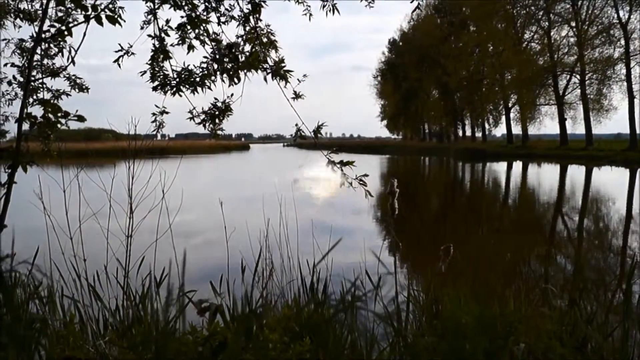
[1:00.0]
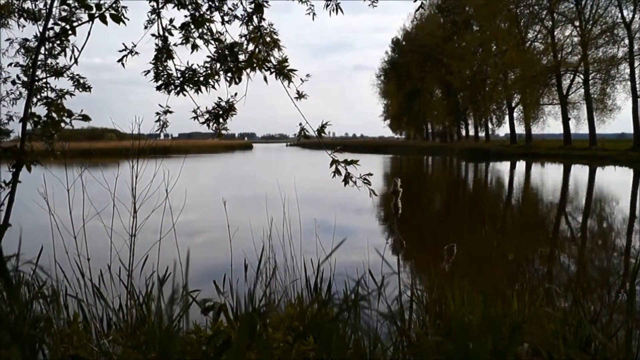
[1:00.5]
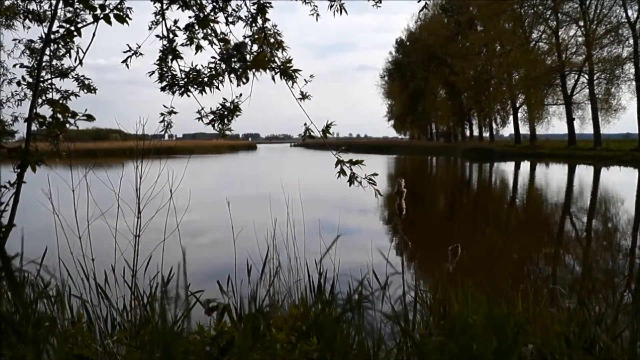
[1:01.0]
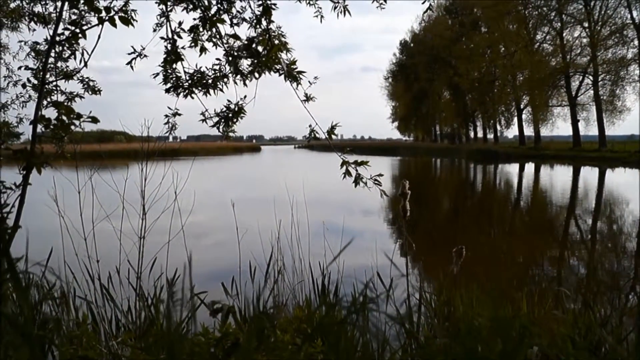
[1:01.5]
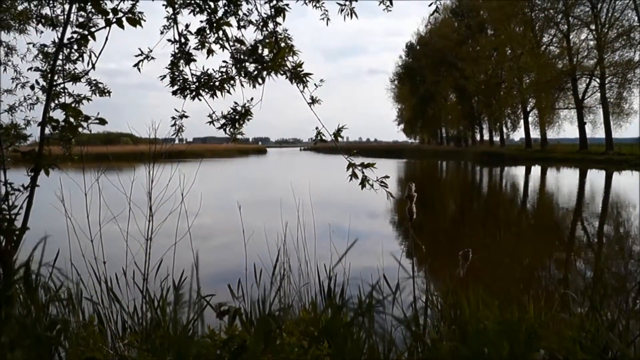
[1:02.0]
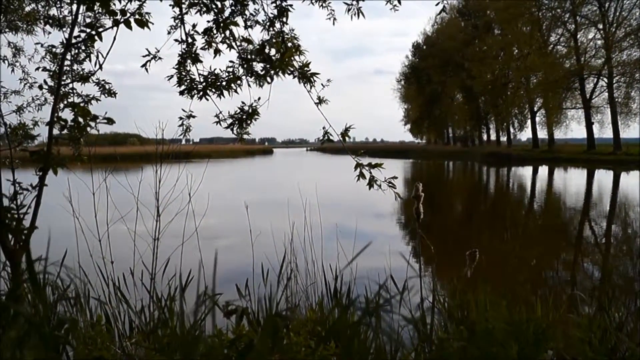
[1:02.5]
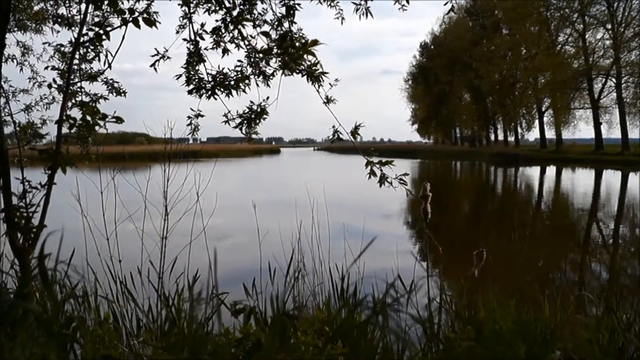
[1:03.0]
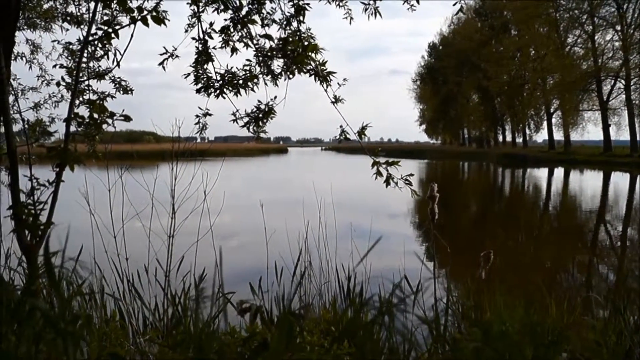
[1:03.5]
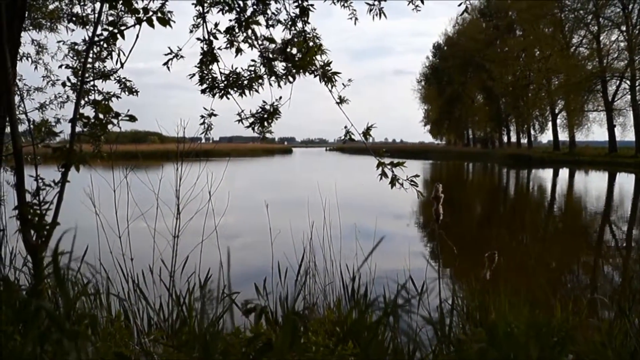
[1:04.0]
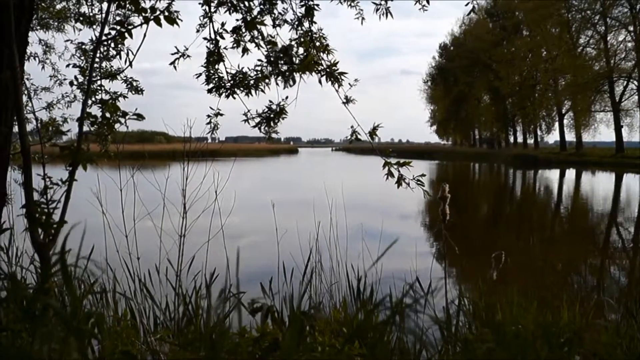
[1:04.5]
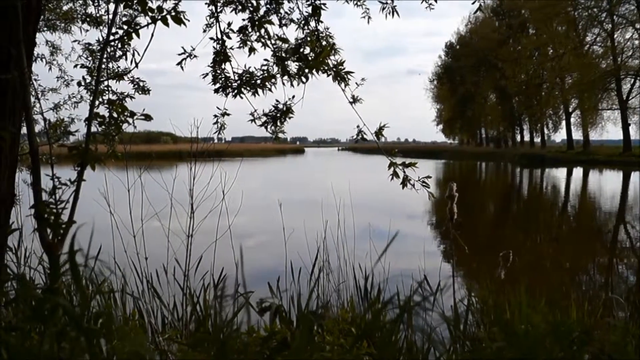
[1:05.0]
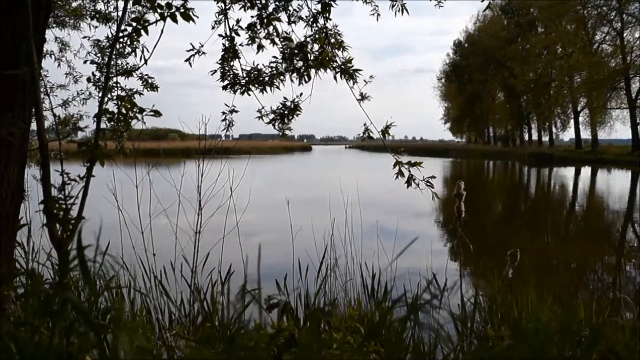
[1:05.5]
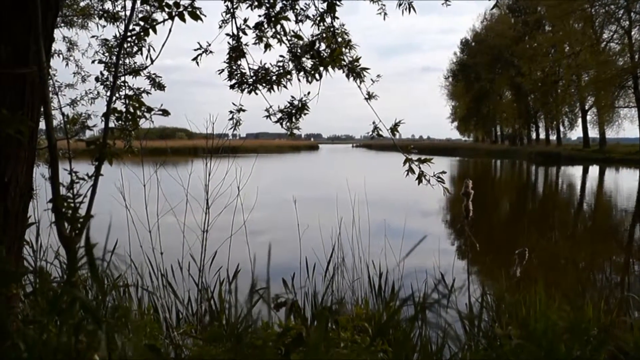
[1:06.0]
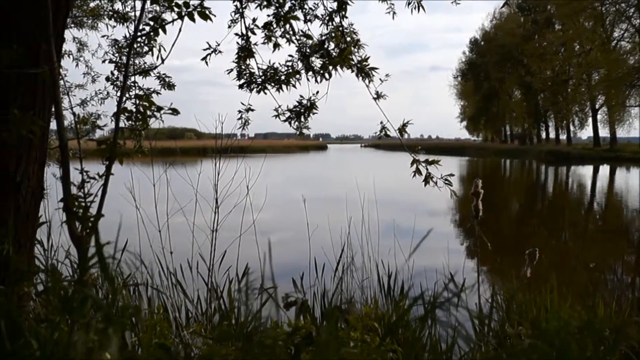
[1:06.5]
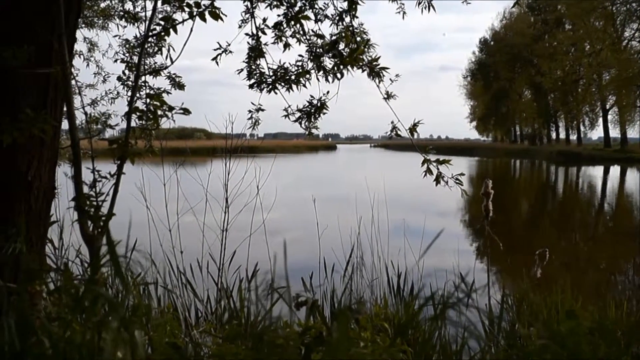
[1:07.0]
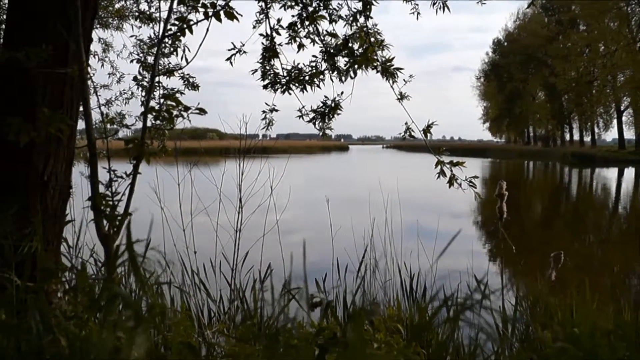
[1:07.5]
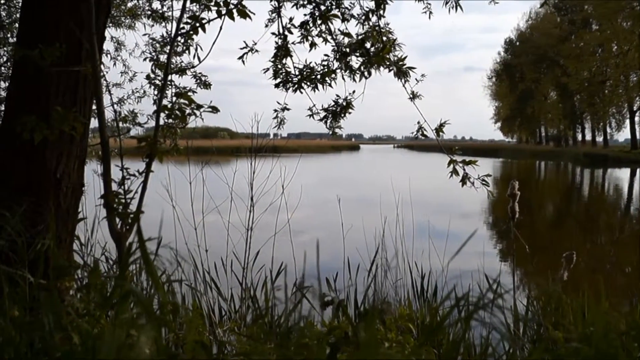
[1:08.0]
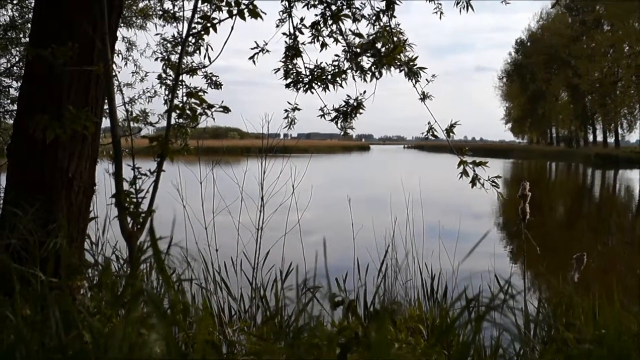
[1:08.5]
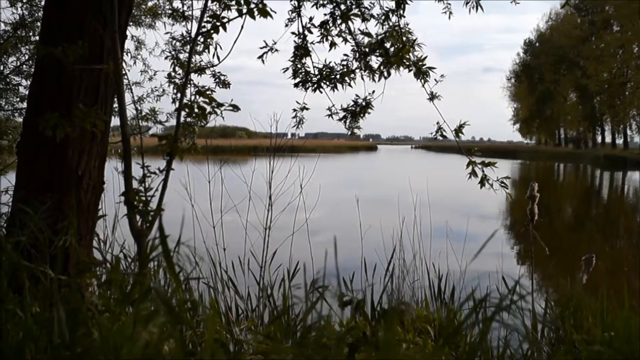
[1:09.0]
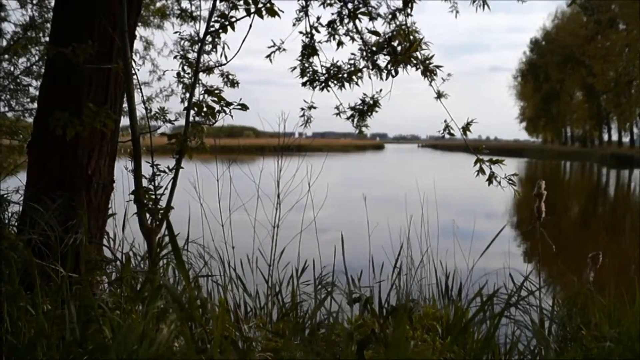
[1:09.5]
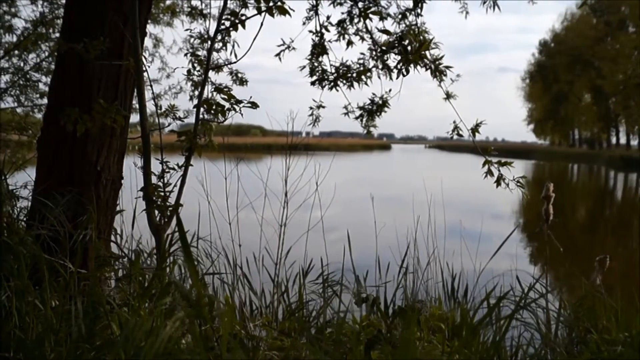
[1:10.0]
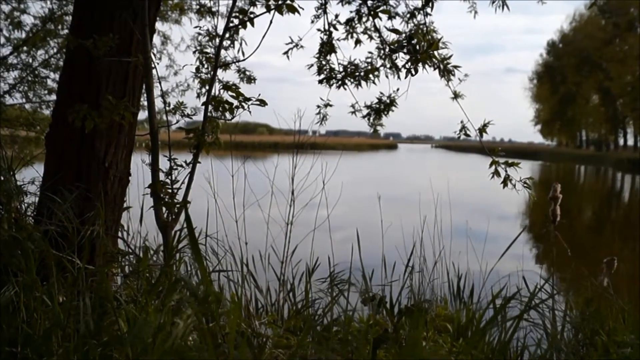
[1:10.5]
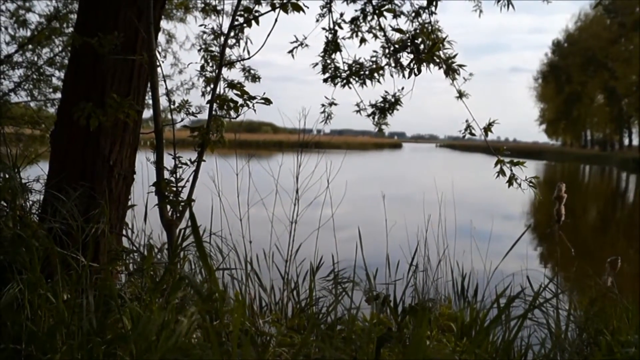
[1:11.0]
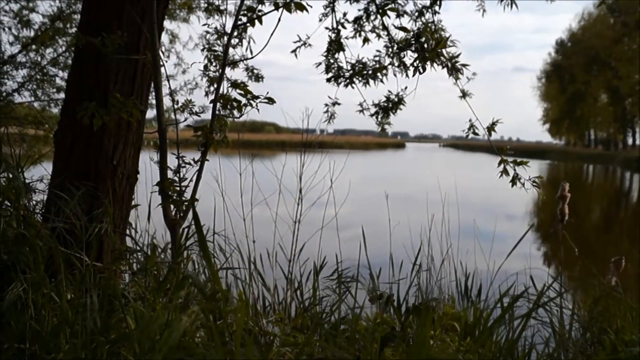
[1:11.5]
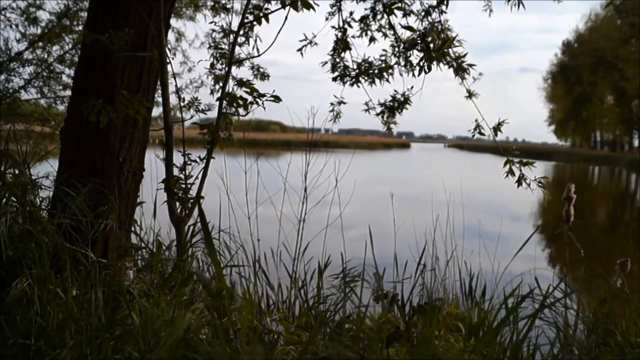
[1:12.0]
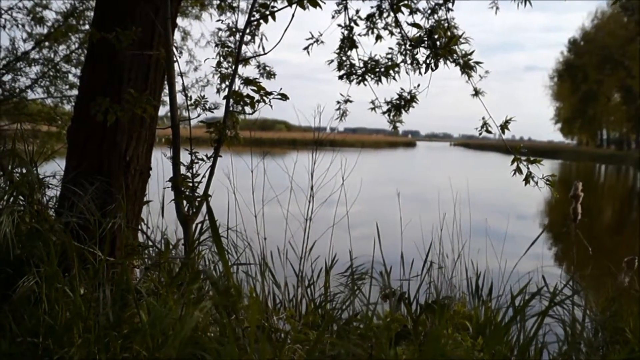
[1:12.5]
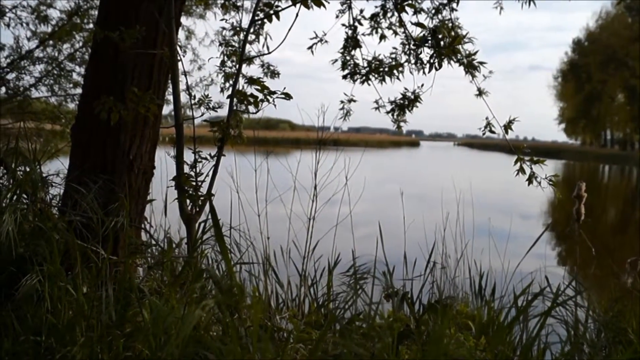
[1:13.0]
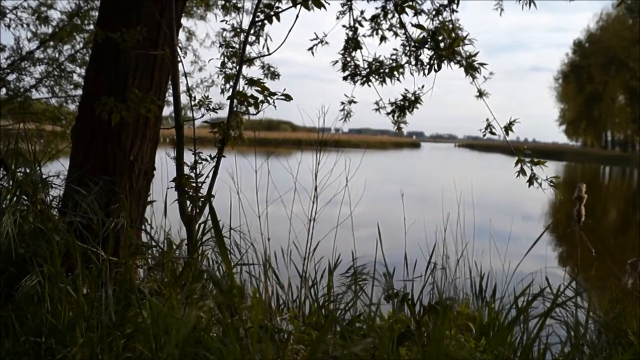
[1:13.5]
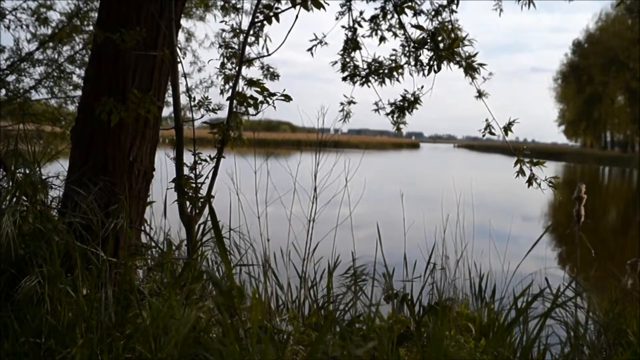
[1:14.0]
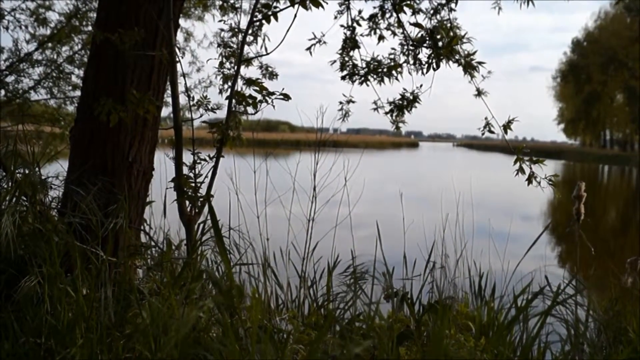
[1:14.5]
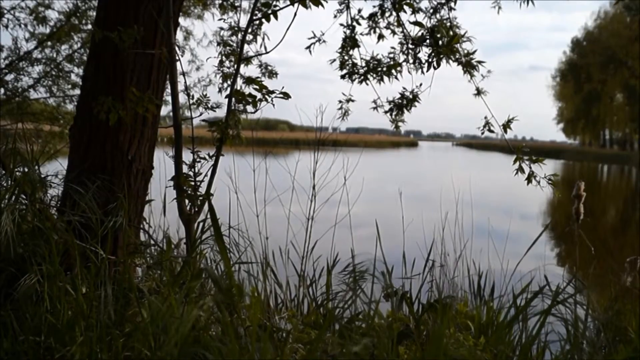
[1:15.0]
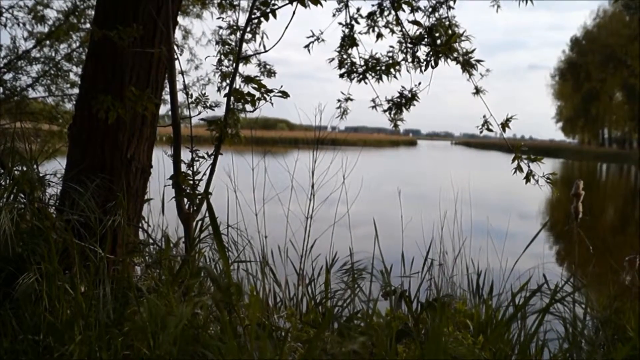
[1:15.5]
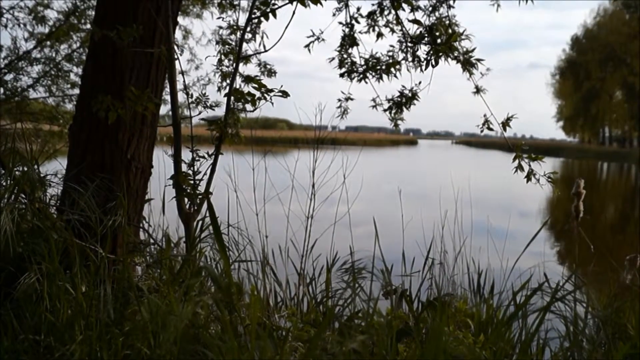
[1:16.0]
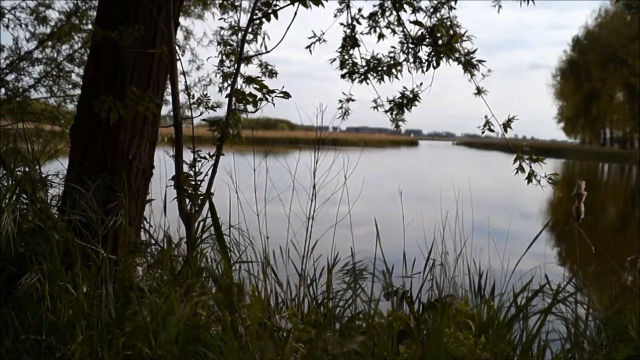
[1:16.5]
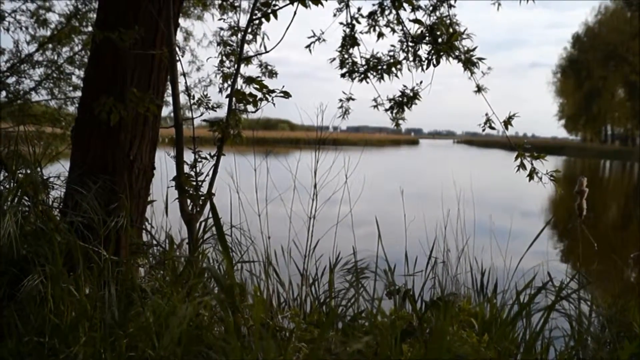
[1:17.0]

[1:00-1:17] What looks like a river appears, with a body of water in front, the sky at the top, and the other embankment in the middle on the right side, where around 10 tall trees with leaves are reflected in the river. Long grass is in the foreground, and tree branches and leaves come down in the upper left. The camera slowly pans to the left, revealing a tree trunk on the left side in the foreground with the river in the background, and keeps panning across the water. The sky is cloudy, and a slight breeze makes the long grass at the bottom of the frame wave a little. On the far side there is a little mouth in the river leading further back in the middle. The embankment on the left side looks like just long grass with no trees, while the right side has trees, and in the middle the river seems to flow into another body of water in the background that cannot really be seen. The view stays in this single scene, looking out at the river from under a tree and behind tall grass.